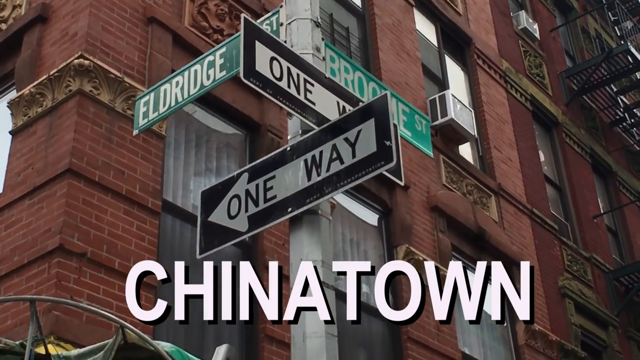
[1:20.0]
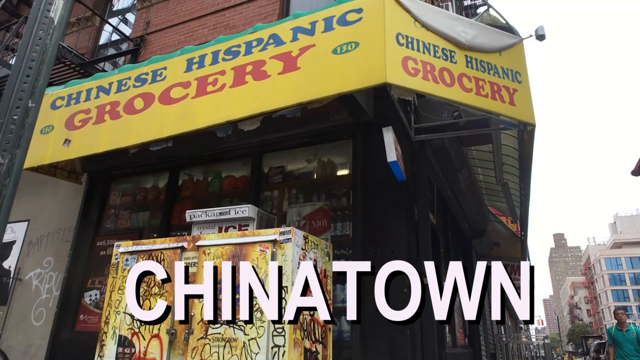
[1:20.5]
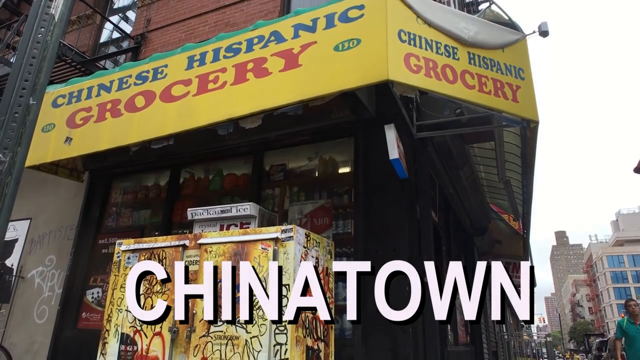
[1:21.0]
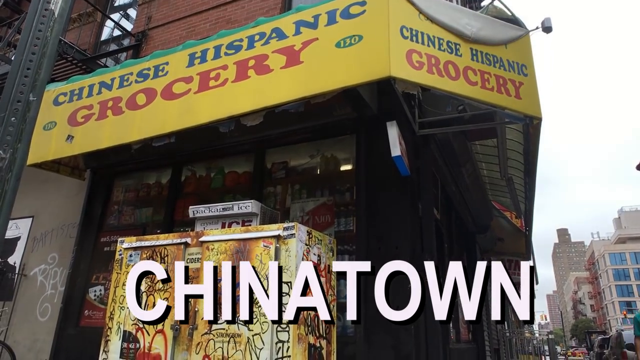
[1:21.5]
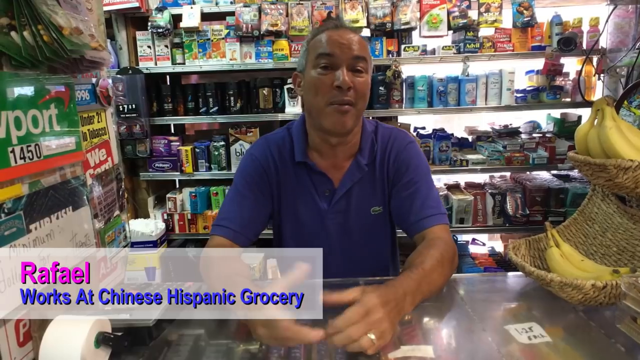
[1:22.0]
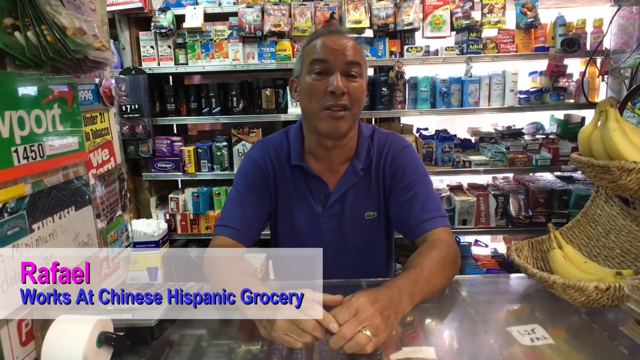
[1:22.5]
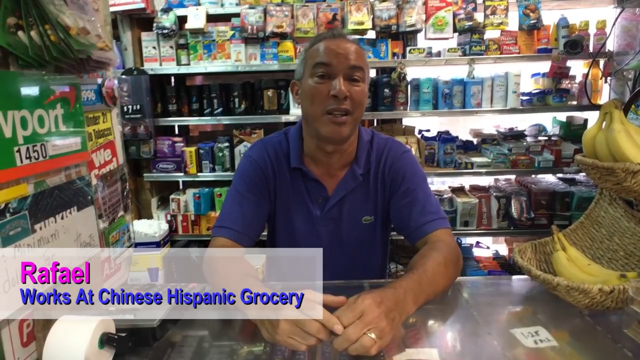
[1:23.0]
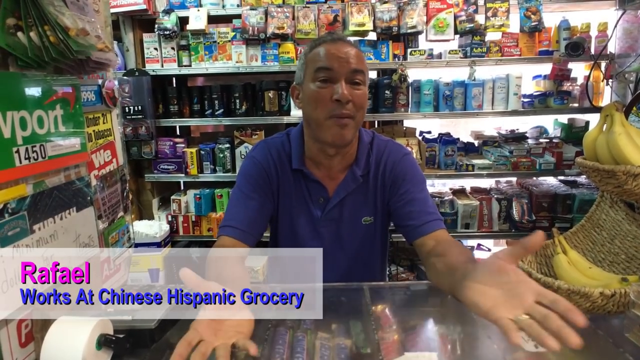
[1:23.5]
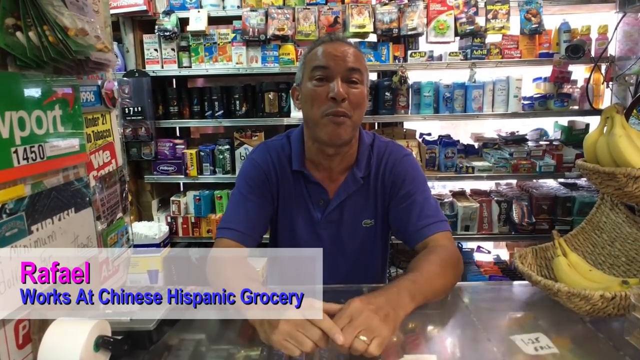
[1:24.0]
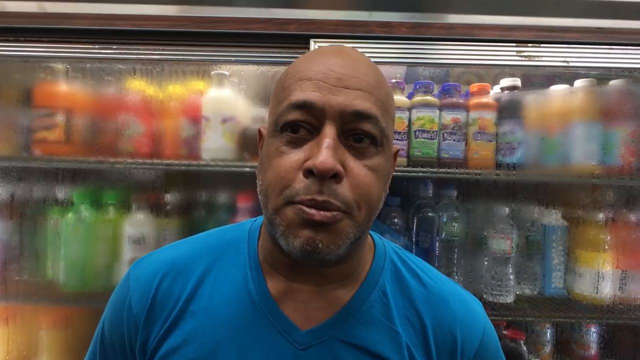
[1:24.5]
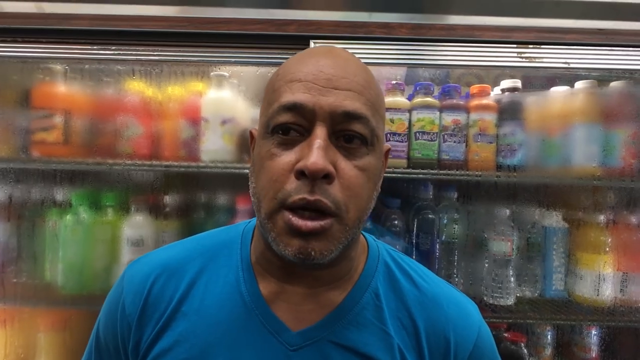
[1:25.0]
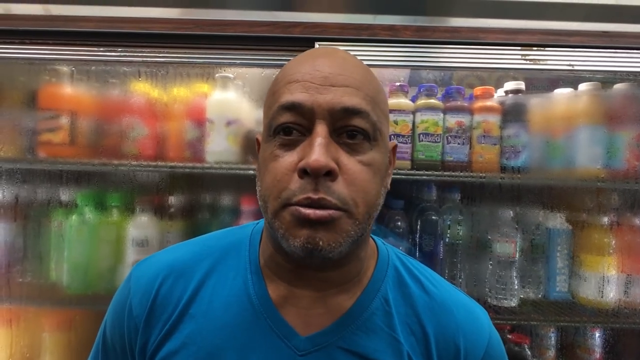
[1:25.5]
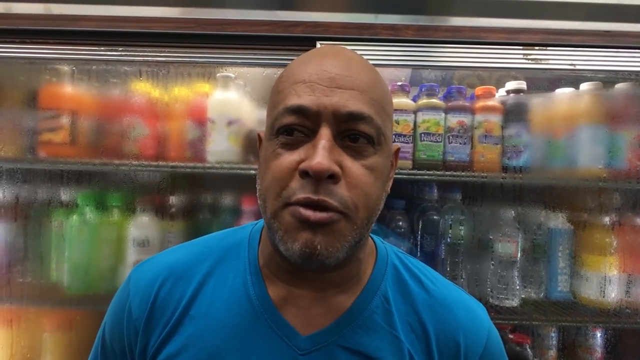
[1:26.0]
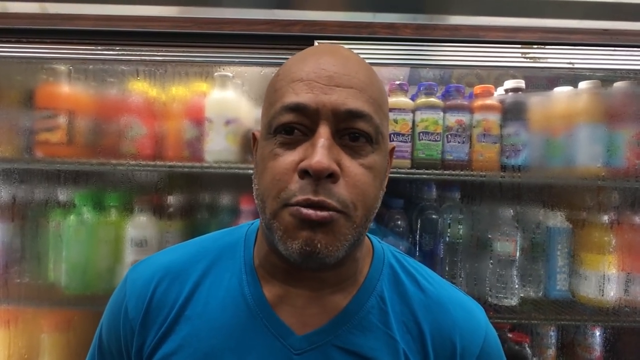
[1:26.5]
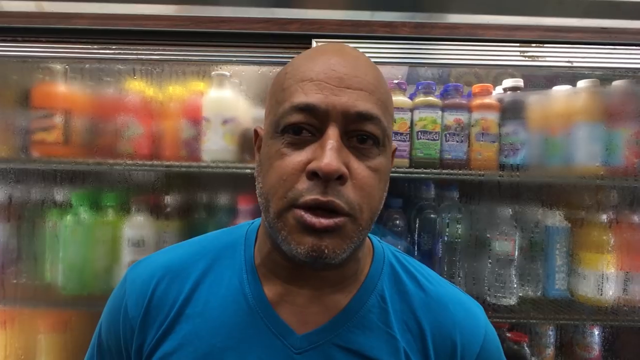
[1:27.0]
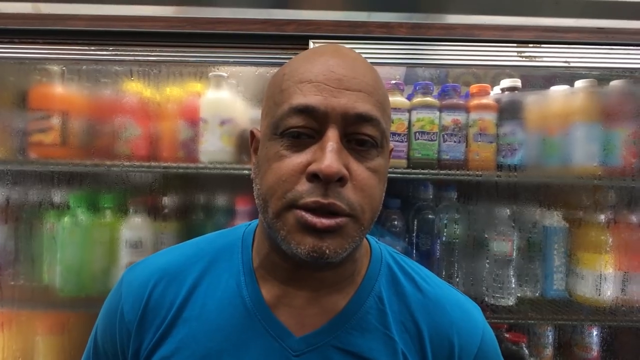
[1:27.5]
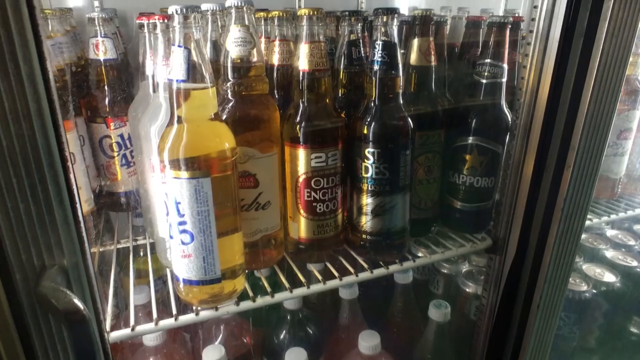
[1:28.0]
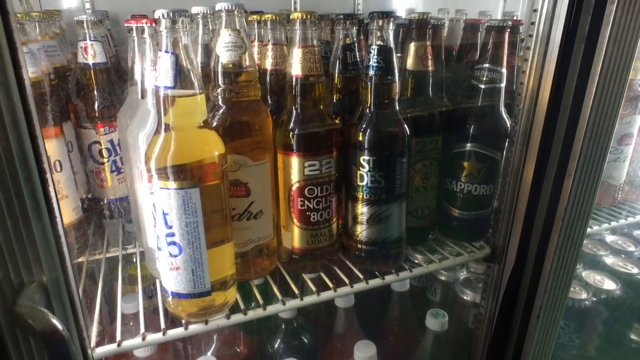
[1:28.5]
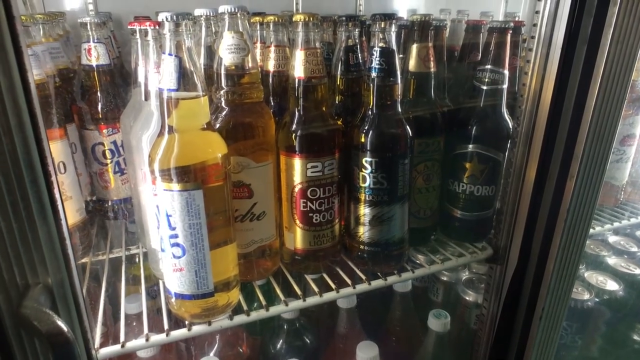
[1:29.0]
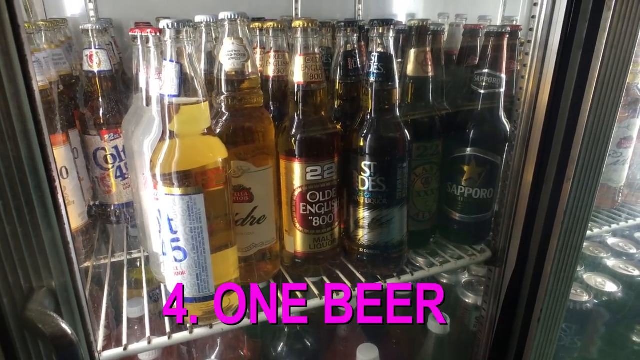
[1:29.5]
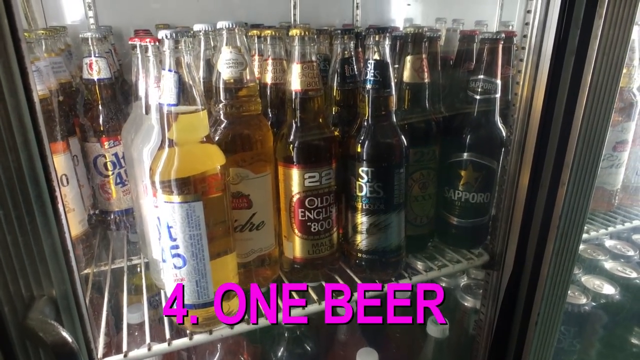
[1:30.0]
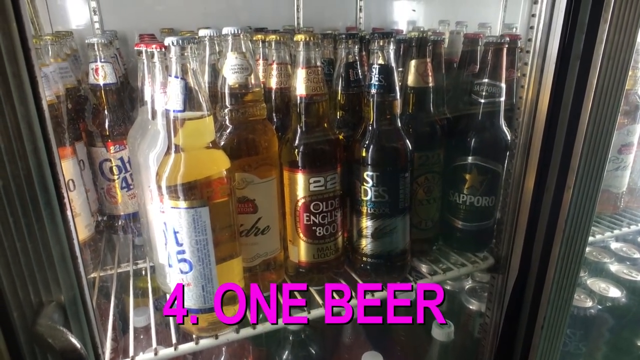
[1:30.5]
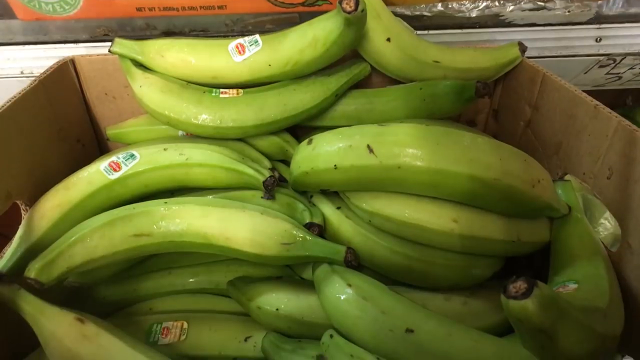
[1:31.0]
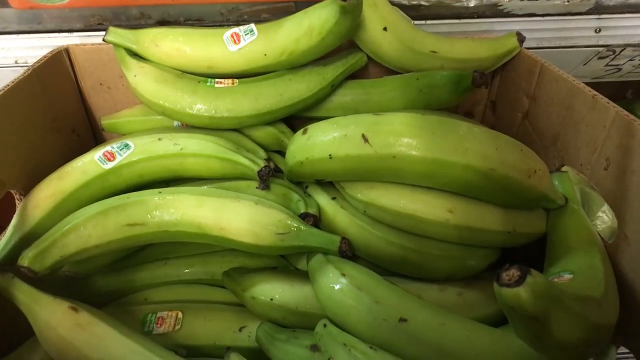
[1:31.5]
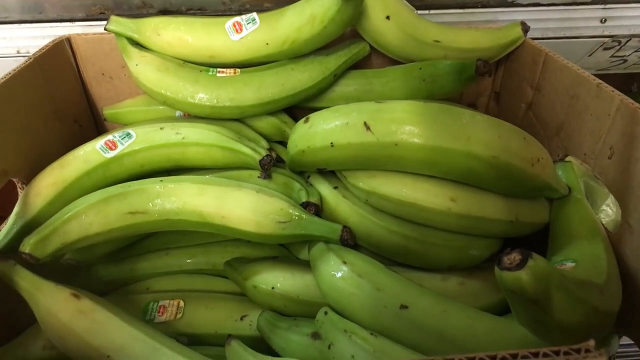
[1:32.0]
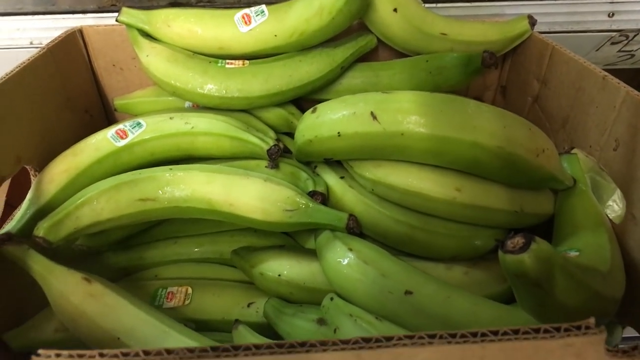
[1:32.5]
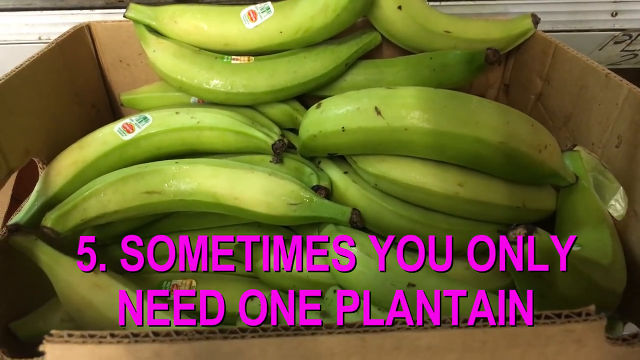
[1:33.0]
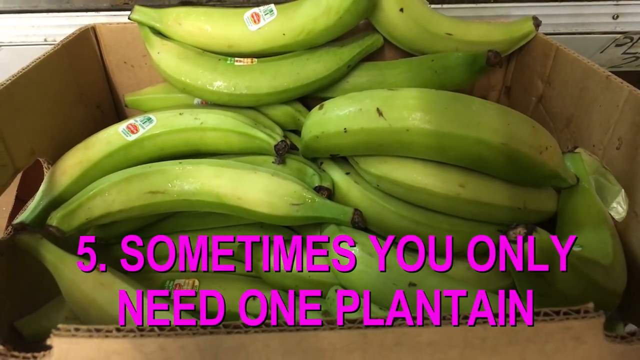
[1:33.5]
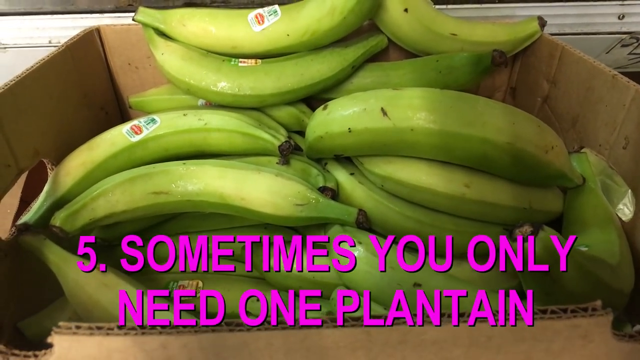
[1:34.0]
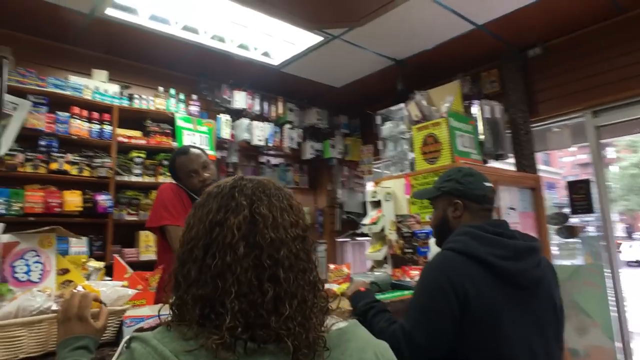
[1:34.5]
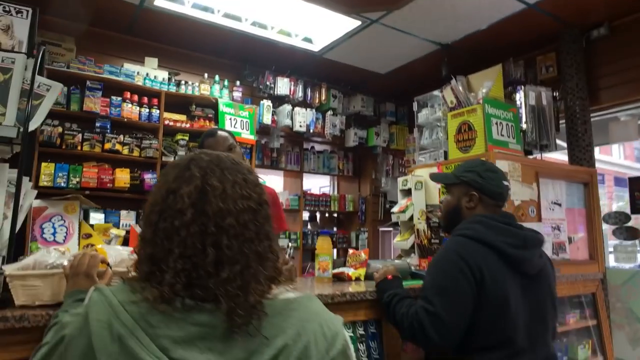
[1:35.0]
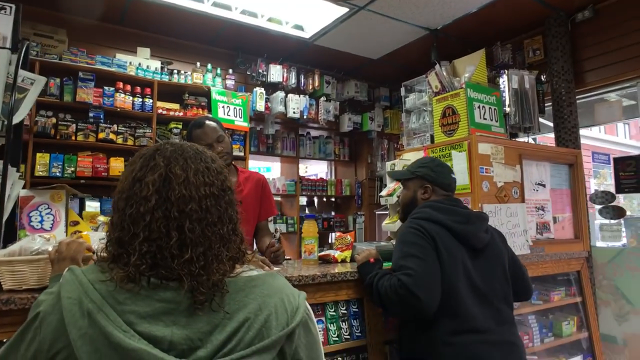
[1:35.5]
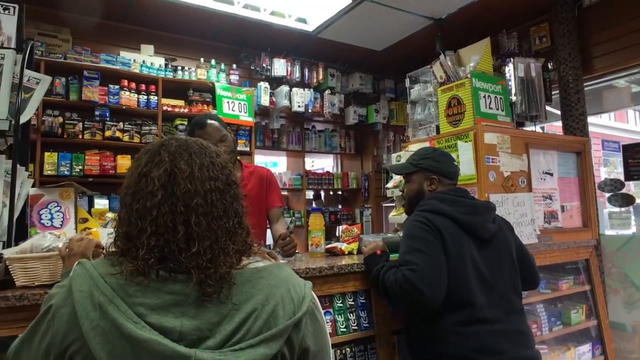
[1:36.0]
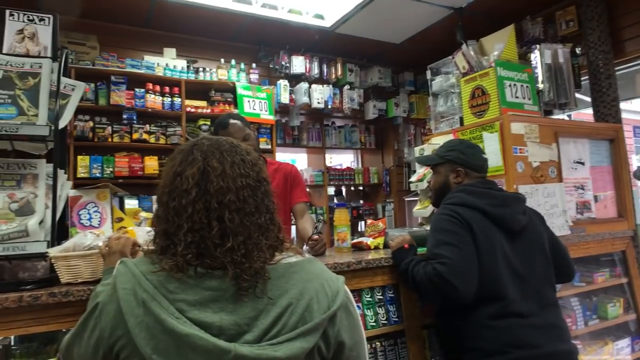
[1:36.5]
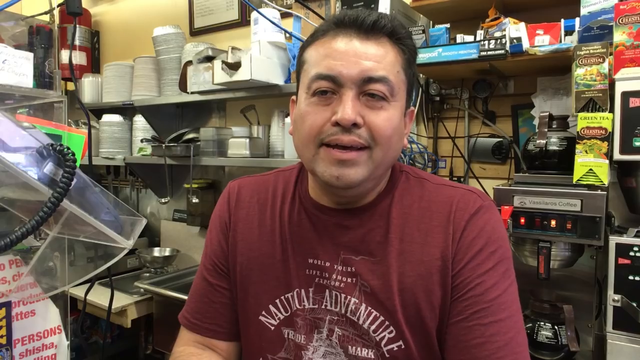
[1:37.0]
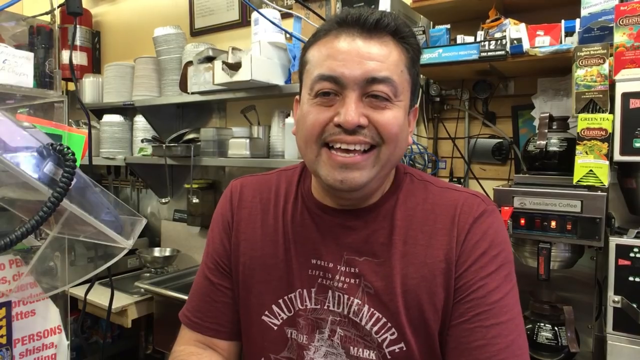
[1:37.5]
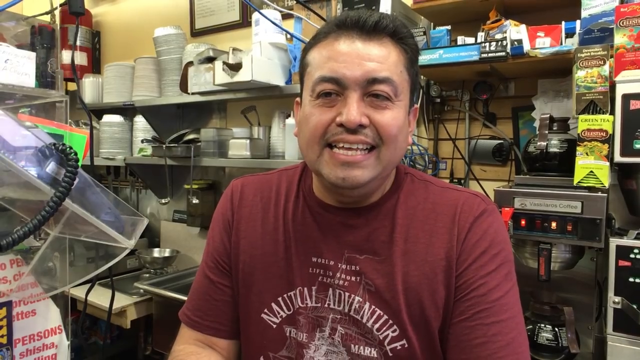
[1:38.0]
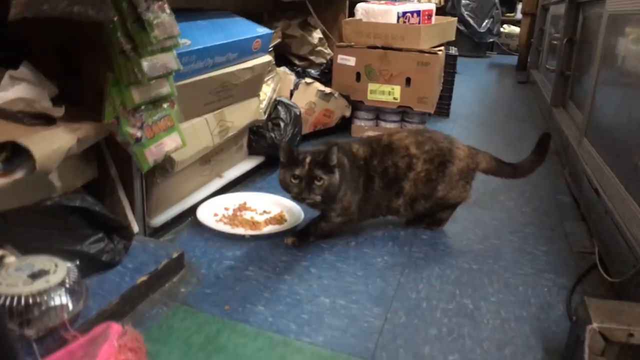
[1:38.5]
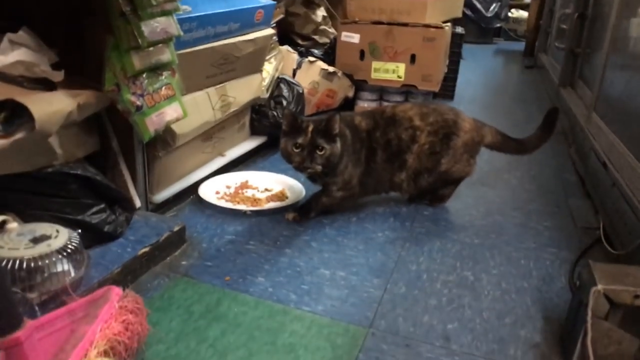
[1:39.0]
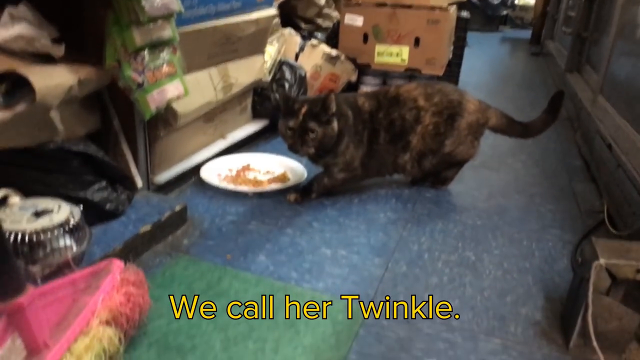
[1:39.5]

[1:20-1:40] A "Chinese Hispanic Grocery" sign is shown on a yellow board in blue and red capital letters, with "Chinatown" still in capitals at the bottom of the screen. Rafael, wearing a blue collared t-shirt, works at the Chinese Hispanic grocery, with different items placed behind him. Bottles of beer are inside a fridge, and text in purple reads "for one beer". Ripe plantains are placed in a box. The scene shifts to a man in a red t-shirt selling juice and snacks to two people: a man wearing a black cap and a white and black hoodie, and a lady wearing a greenish hoodie. A man in a maroon t-shirt is also shown. The scene shifts to a cat eating from a plate, with yellow text reading "we call her twinkie".